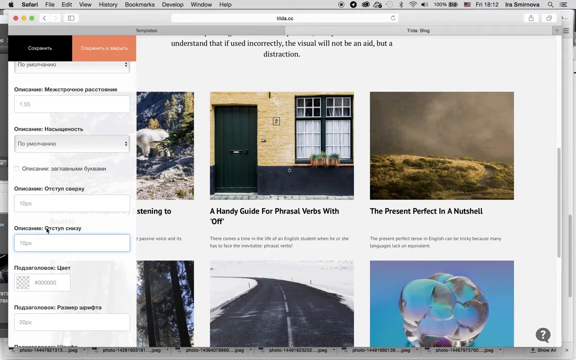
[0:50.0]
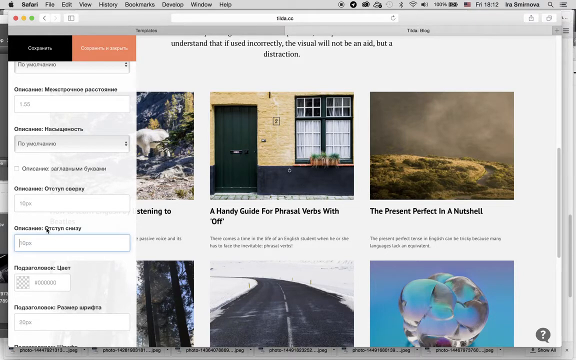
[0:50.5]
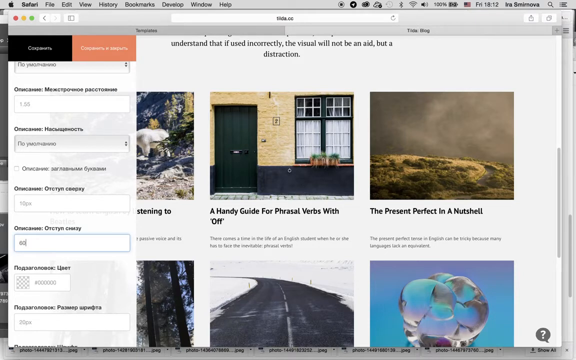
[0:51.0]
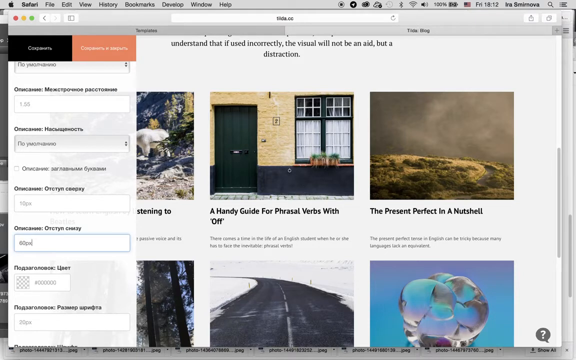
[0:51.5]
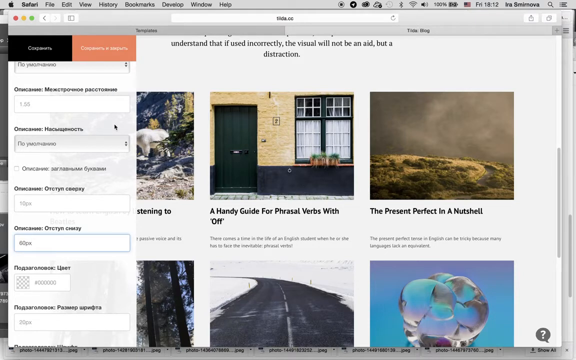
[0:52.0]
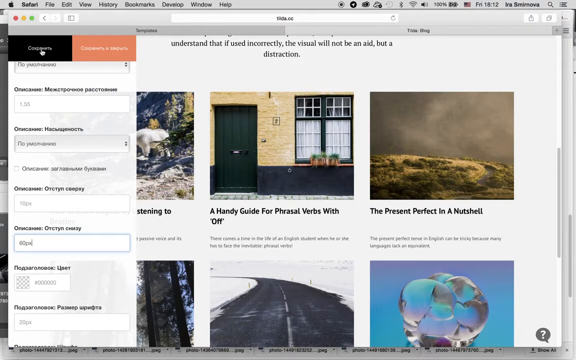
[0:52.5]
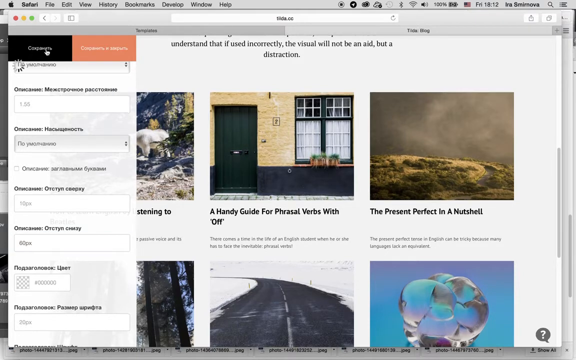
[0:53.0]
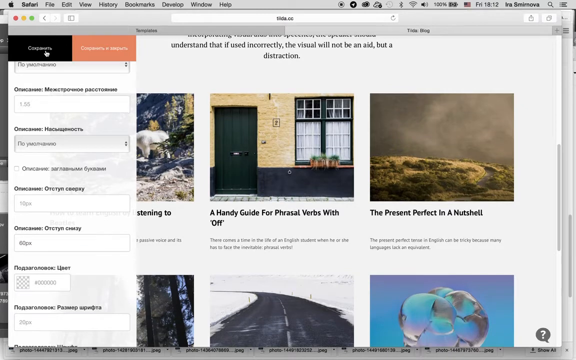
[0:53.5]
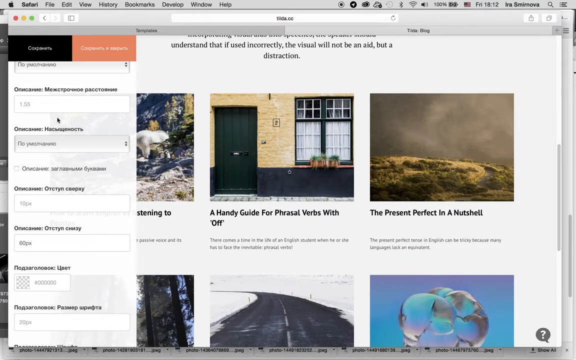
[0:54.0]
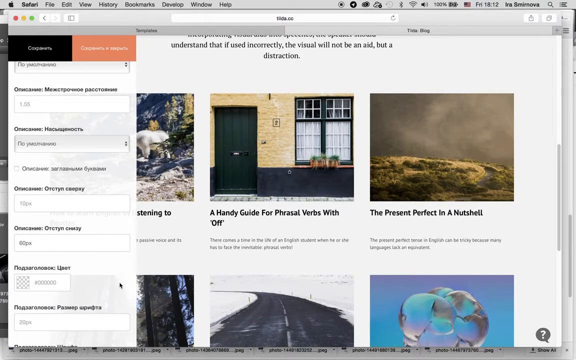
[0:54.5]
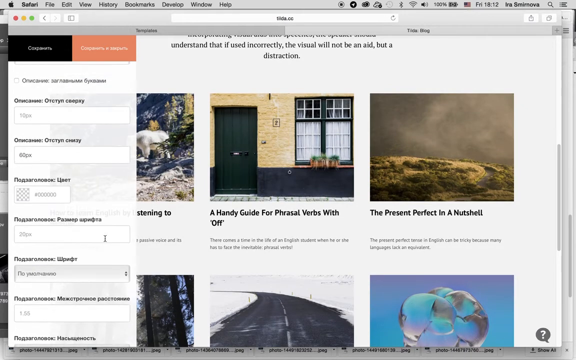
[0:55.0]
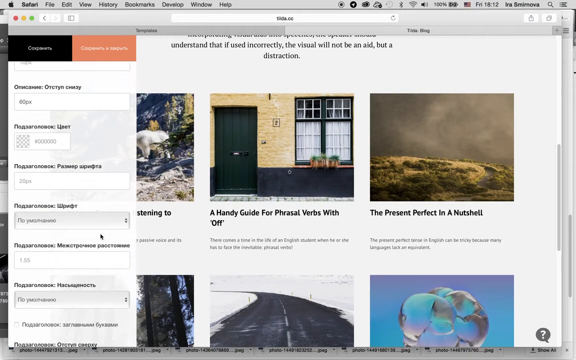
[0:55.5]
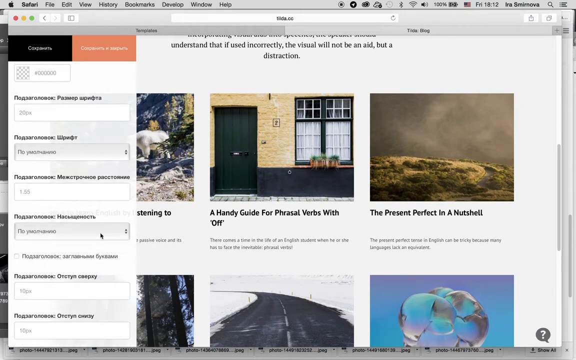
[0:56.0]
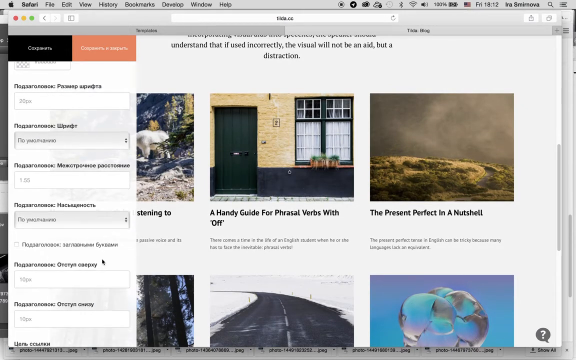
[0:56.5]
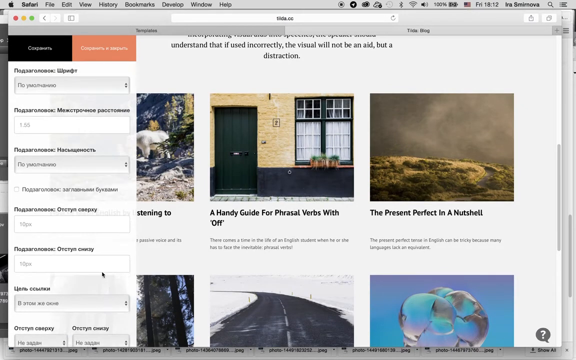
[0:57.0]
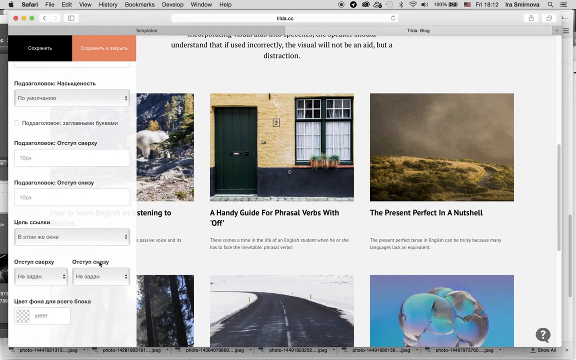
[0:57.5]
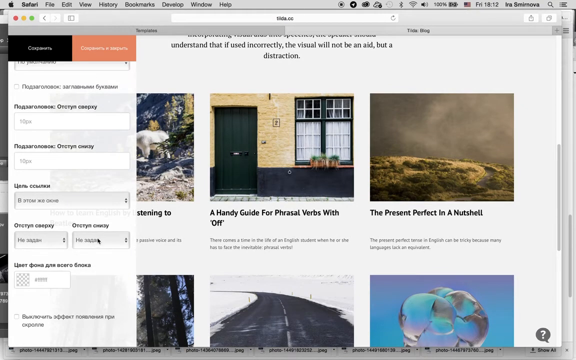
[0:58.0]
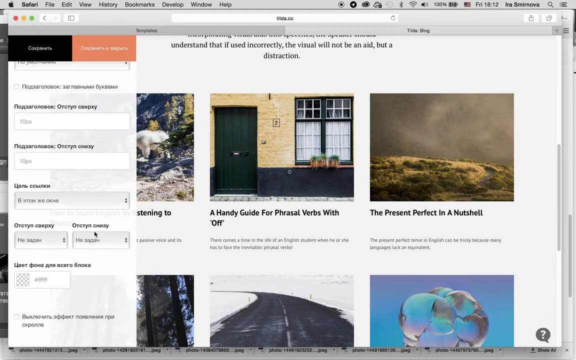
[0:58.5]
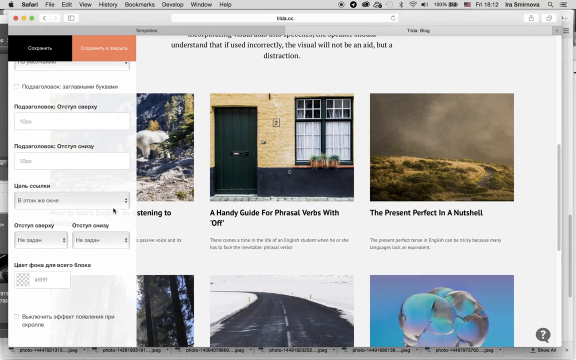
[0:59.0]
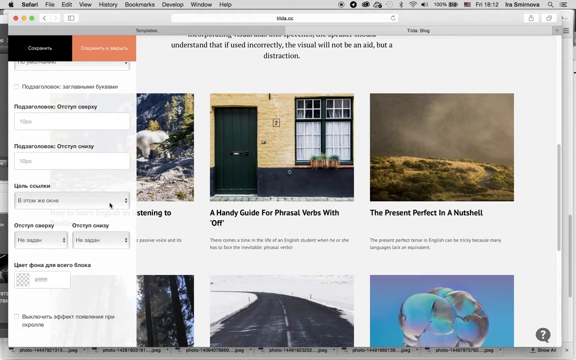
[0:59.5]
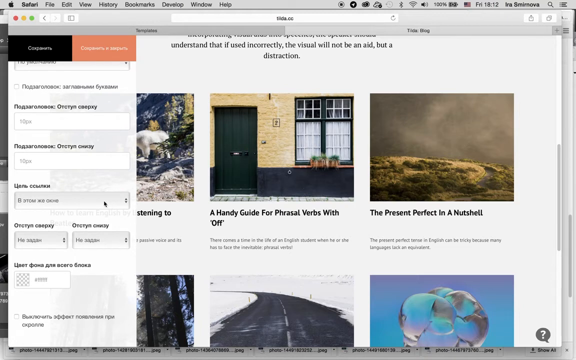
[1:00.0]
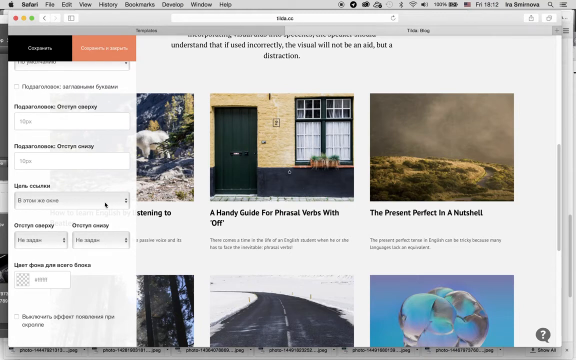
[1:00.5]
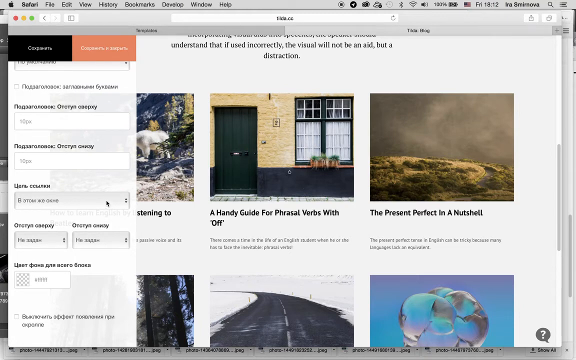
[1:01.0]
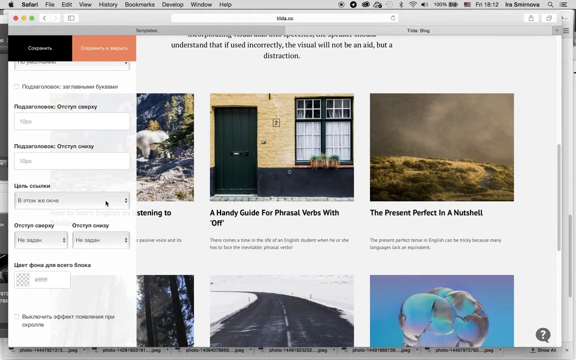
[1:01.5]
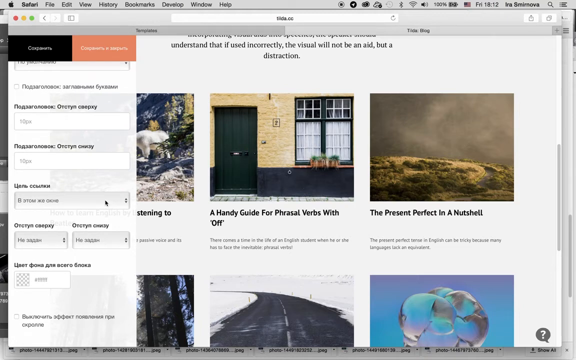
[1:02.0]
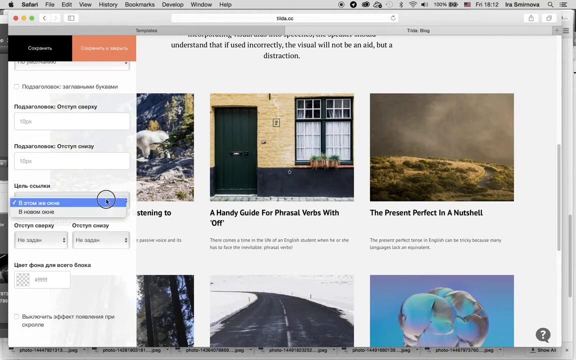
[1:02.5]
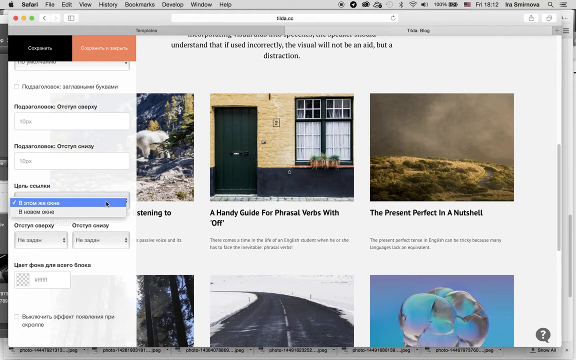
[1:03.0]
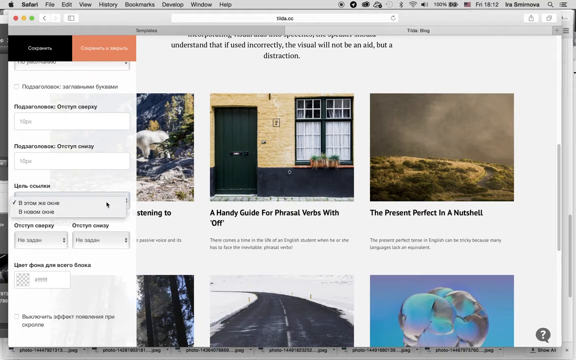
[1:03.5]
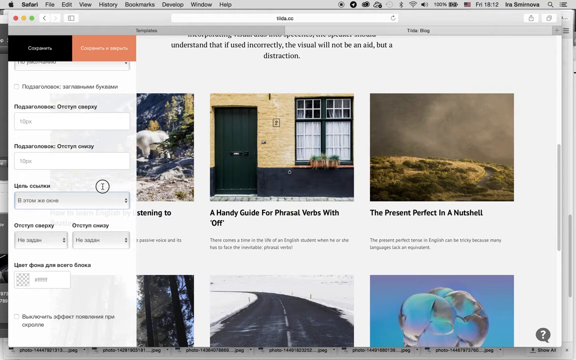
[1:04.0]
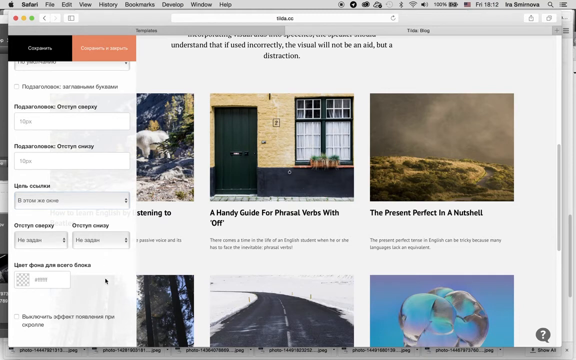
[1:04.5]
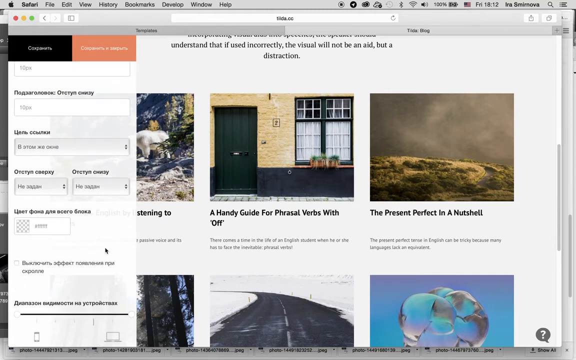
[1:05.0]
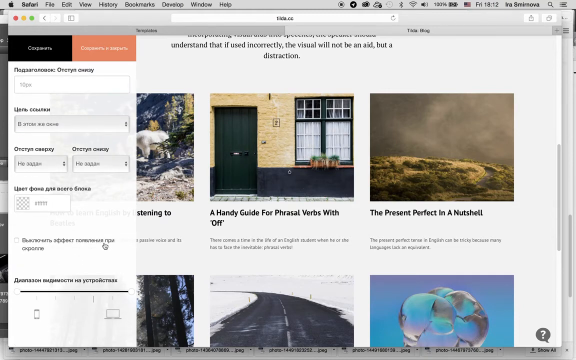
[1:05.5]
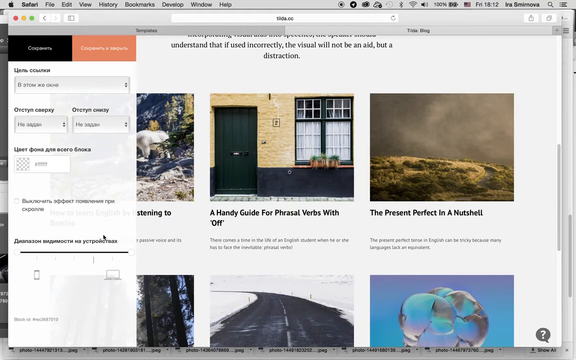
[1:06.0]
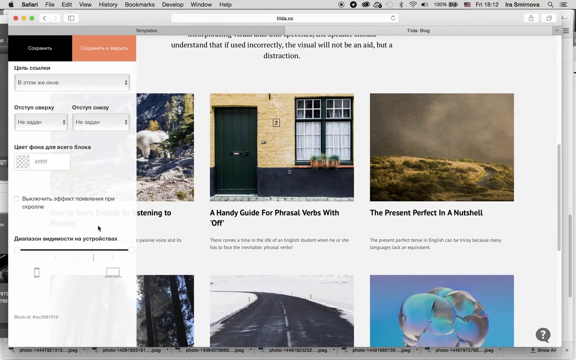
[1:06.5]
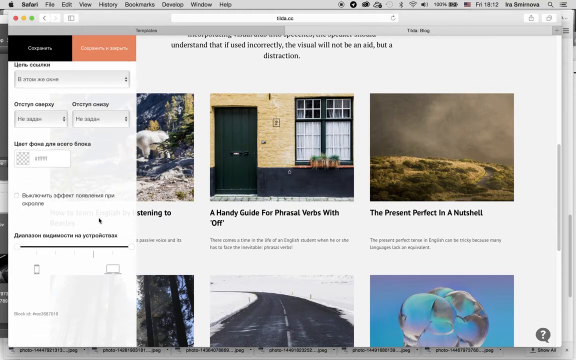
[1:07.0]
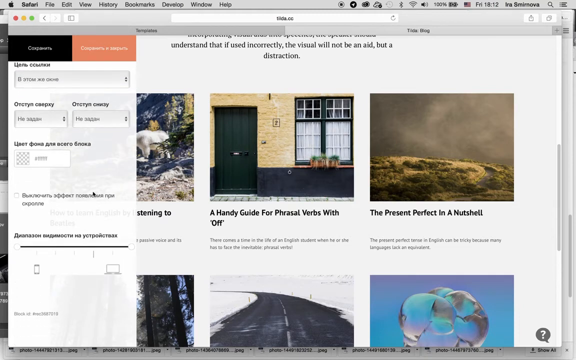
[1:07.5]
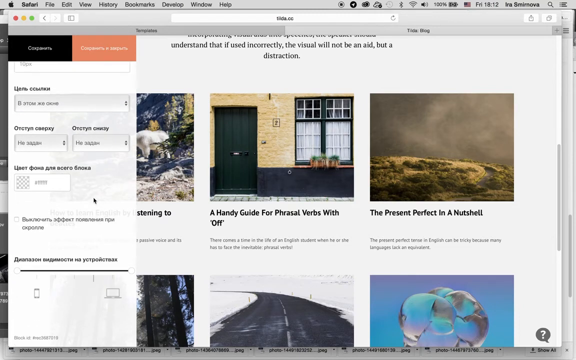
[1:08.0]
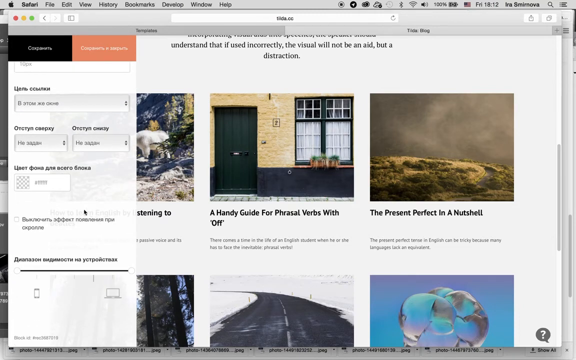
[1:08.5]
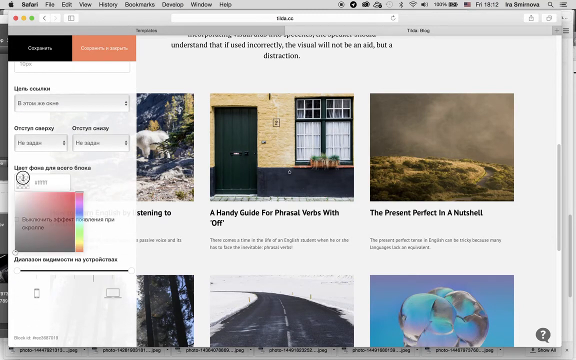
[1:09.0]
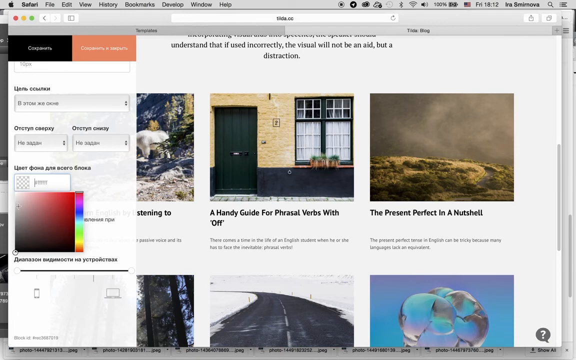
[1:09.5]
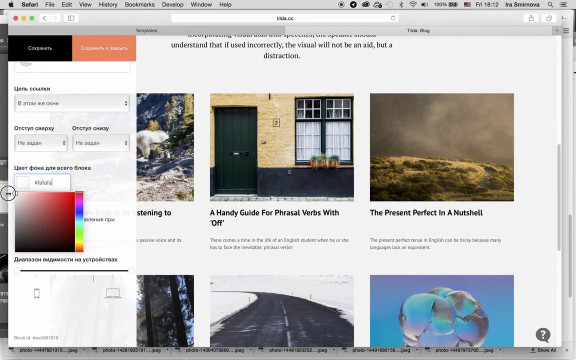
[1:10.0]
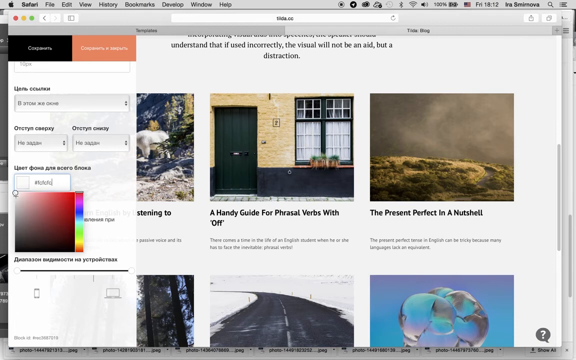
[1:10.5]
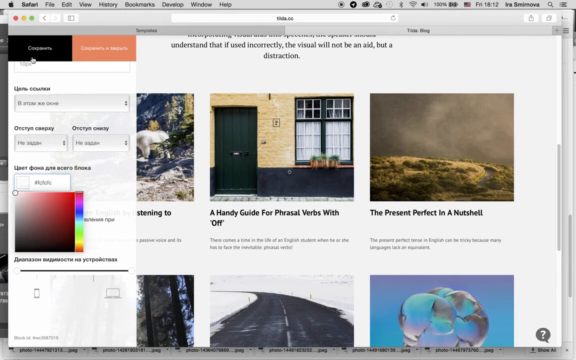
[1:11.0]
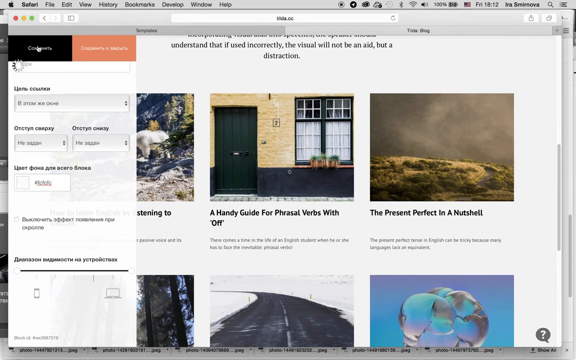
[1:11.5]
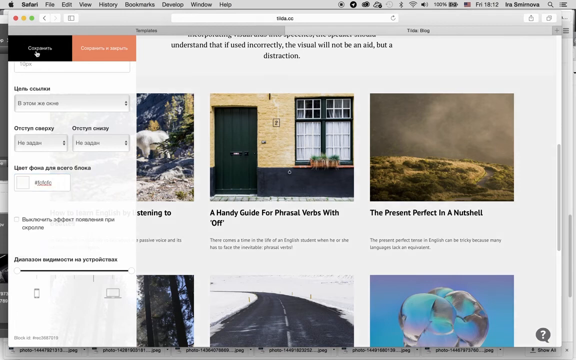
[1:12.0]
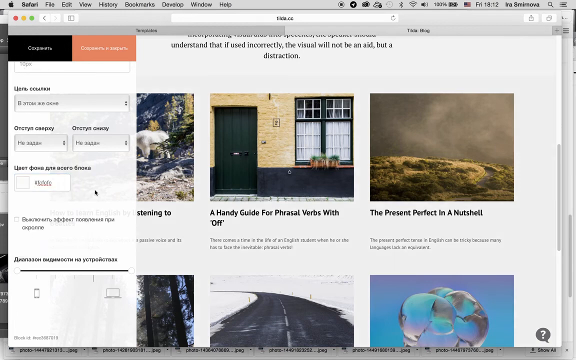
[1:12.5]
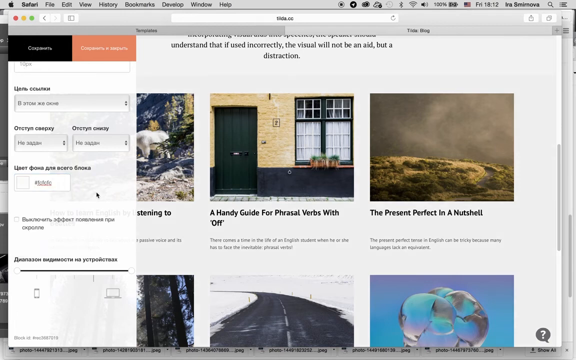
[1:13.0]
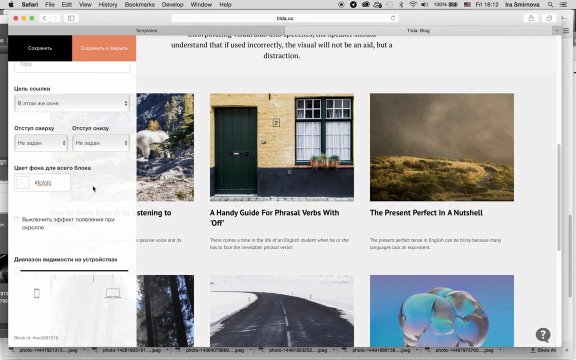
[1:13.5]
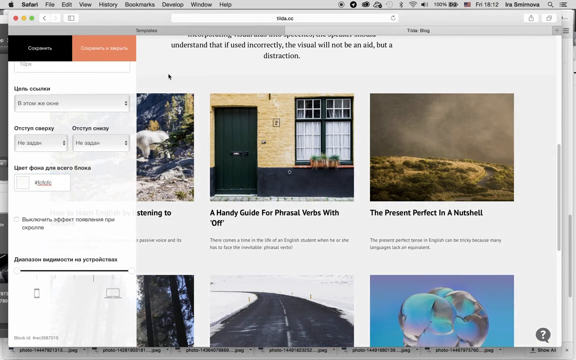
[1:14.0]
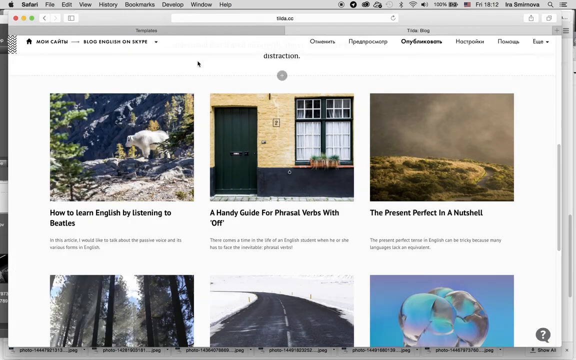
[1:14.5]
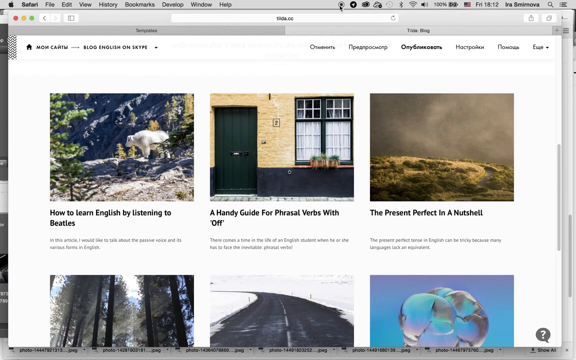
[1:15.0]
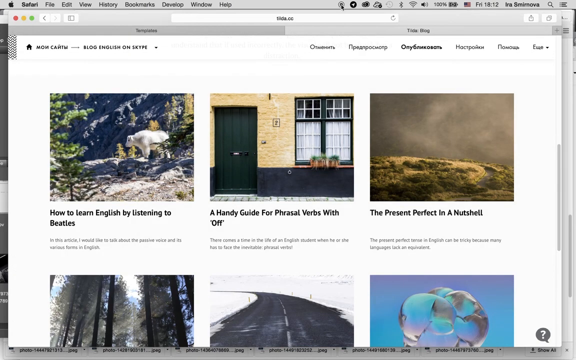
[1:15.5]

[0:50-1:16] What looks like a website shows different topics, each in its own window that can probably be clicked to visit that topic. Someone has a menu open on the website that looks like it is in Russian characters. One of the windows has the topic "a handy guide for phrasal verbs with off" and shows a picture of a residence or building that looks UK in style. The building has a door with forest green paint and a border or outline at the bottom in the same forest green, like a trim. Its bricks are kind of a creamy yellow. Two windows to the right of the door are separated by some of the bricks, and they have white curtains, some white framing, and a forest green outline that is also part of the frame.